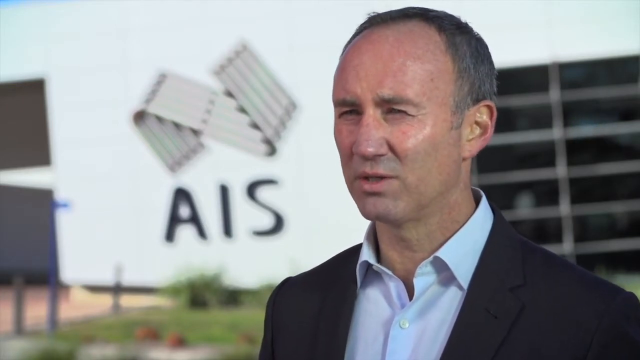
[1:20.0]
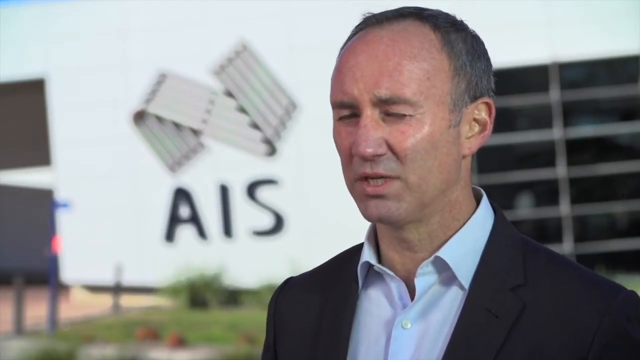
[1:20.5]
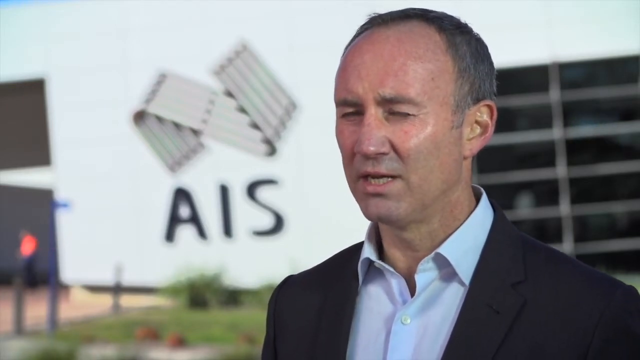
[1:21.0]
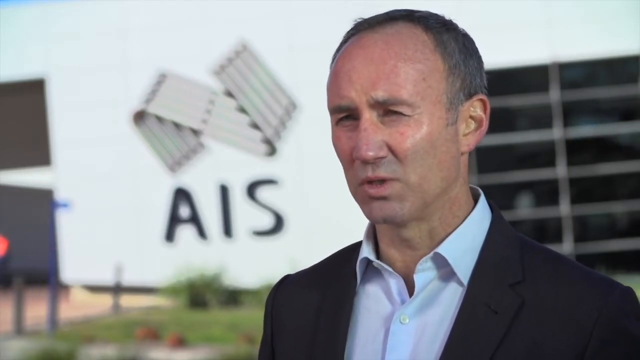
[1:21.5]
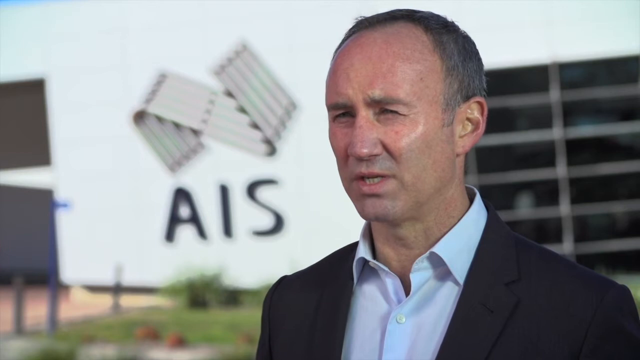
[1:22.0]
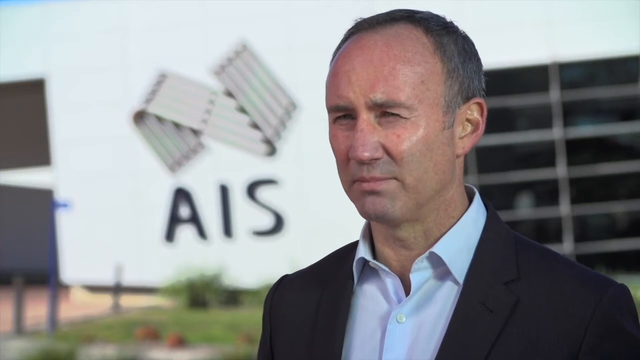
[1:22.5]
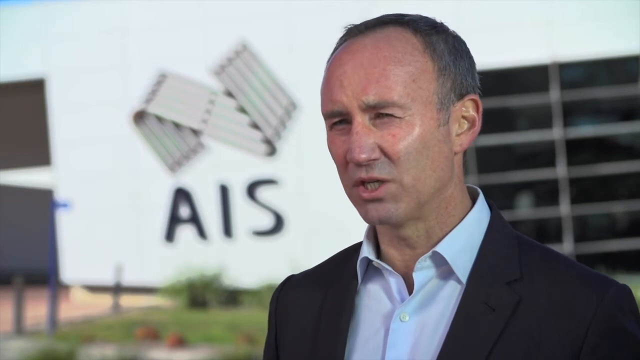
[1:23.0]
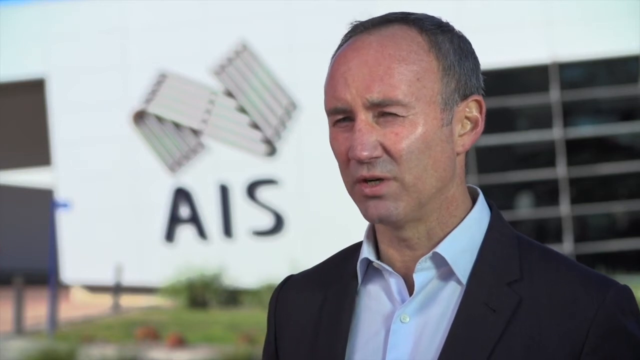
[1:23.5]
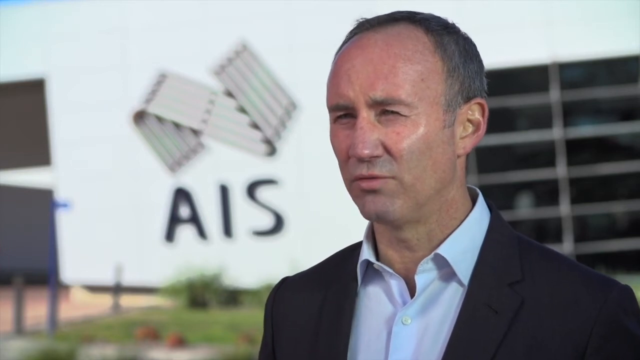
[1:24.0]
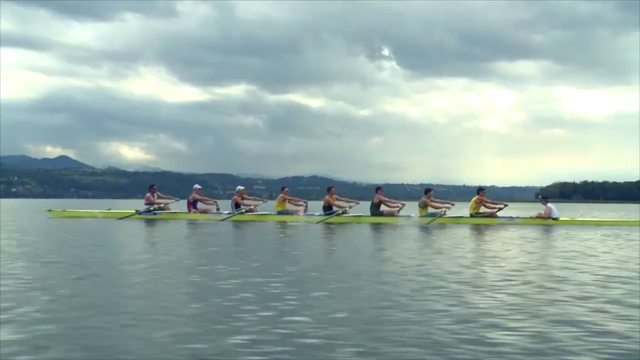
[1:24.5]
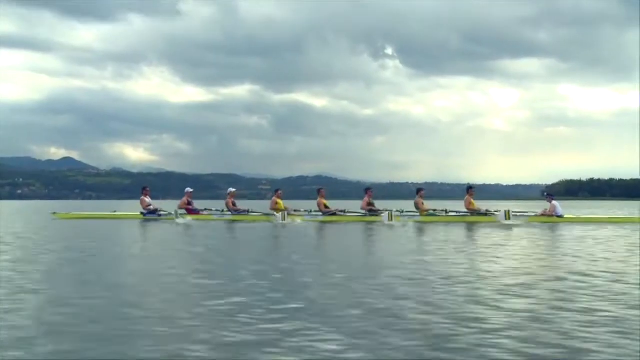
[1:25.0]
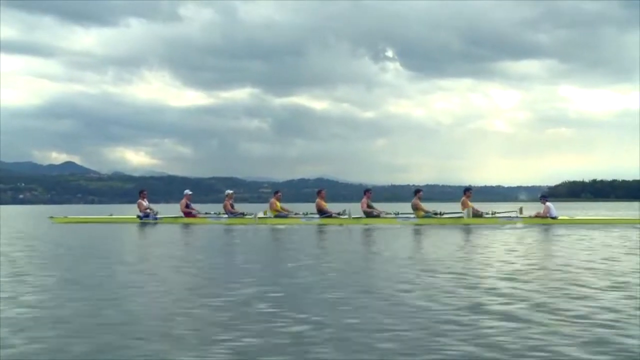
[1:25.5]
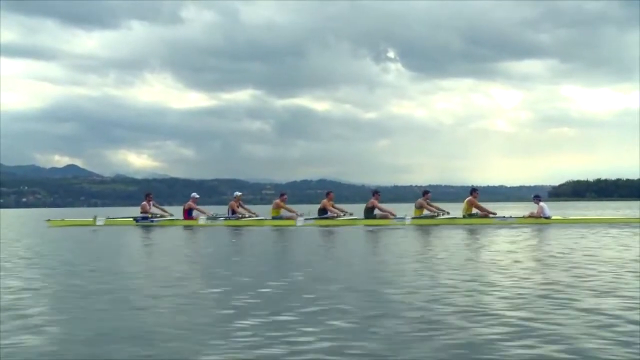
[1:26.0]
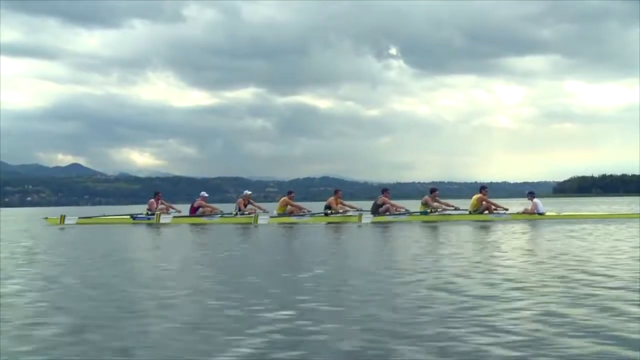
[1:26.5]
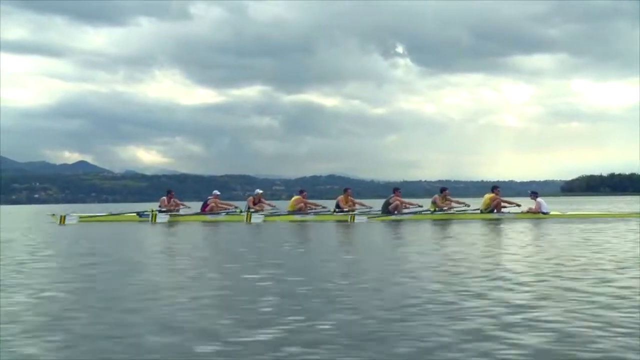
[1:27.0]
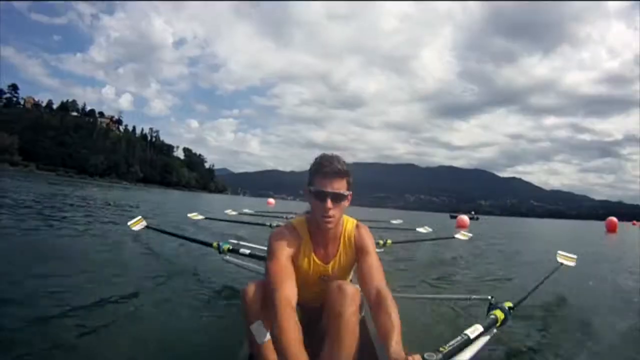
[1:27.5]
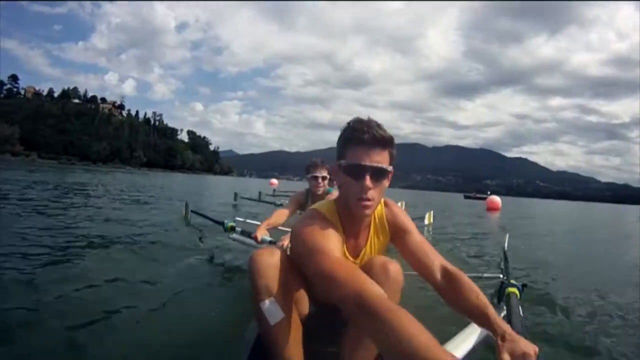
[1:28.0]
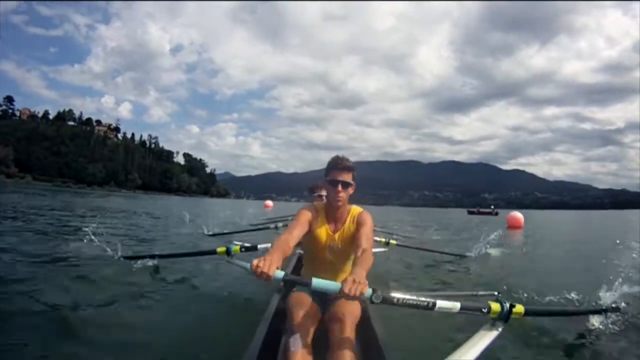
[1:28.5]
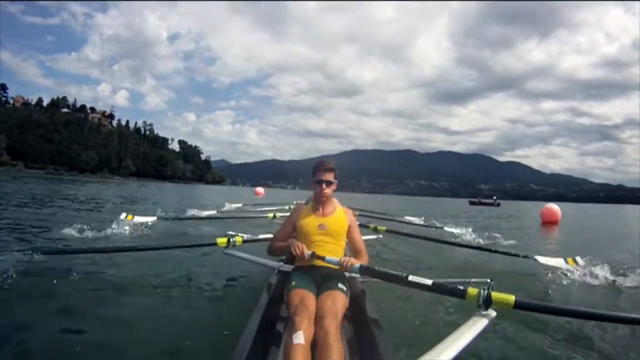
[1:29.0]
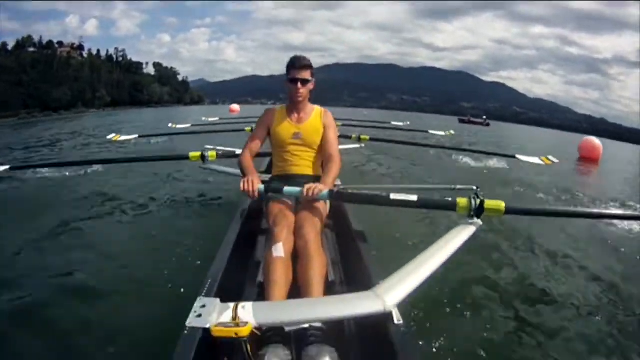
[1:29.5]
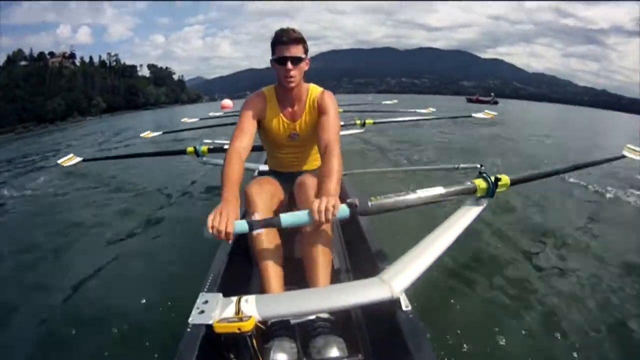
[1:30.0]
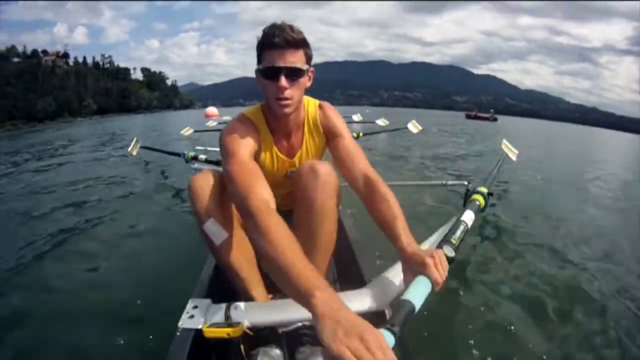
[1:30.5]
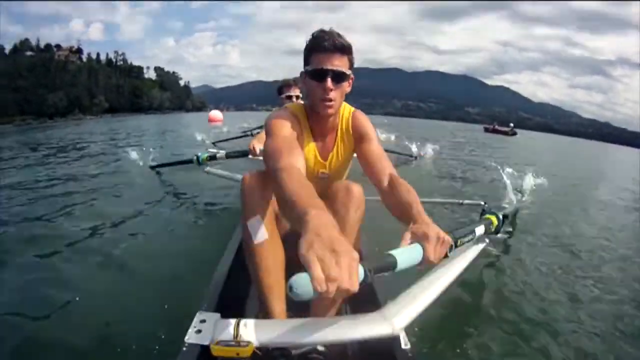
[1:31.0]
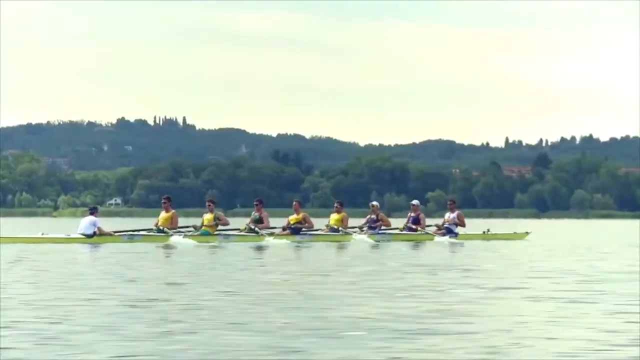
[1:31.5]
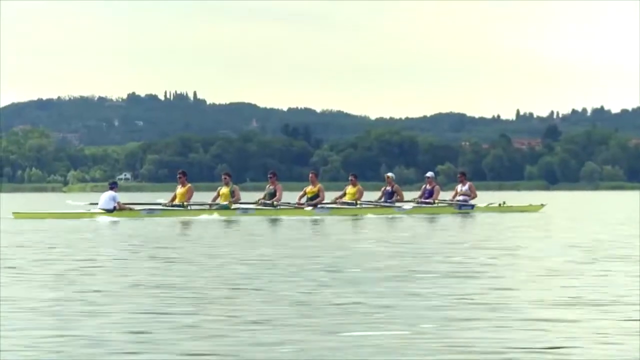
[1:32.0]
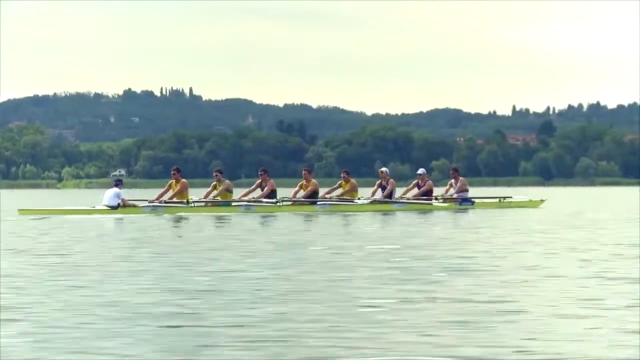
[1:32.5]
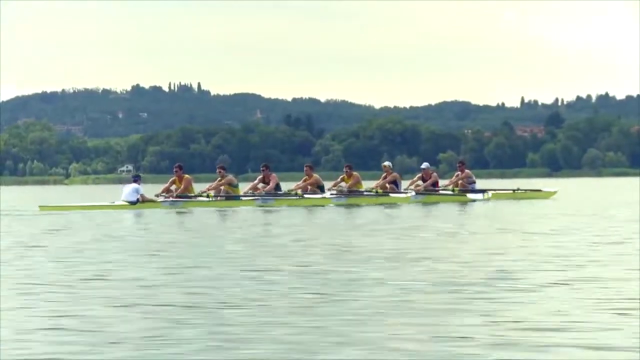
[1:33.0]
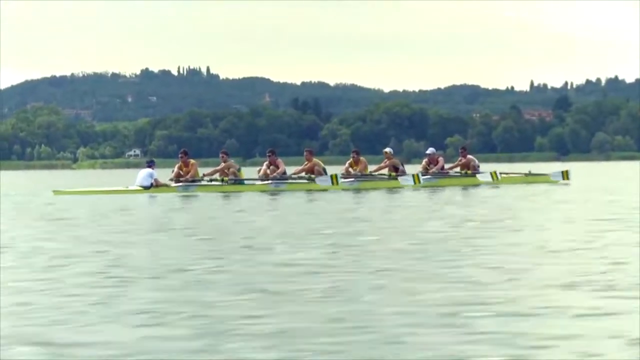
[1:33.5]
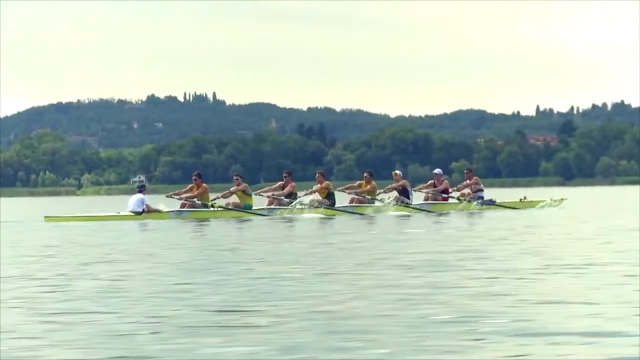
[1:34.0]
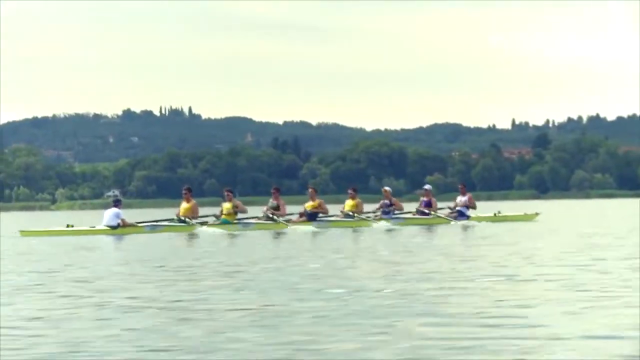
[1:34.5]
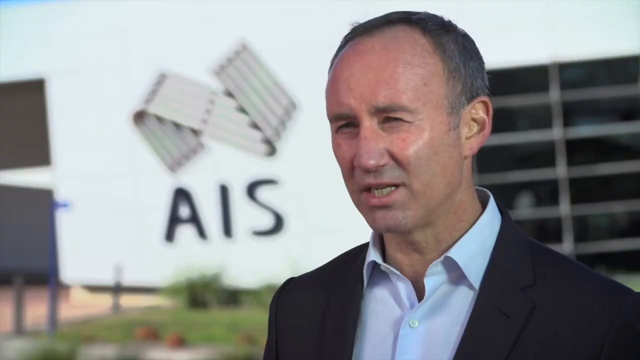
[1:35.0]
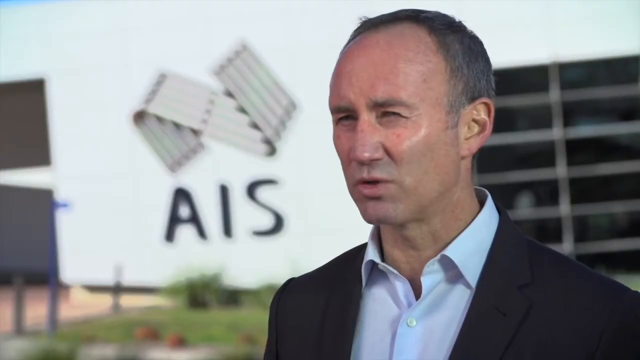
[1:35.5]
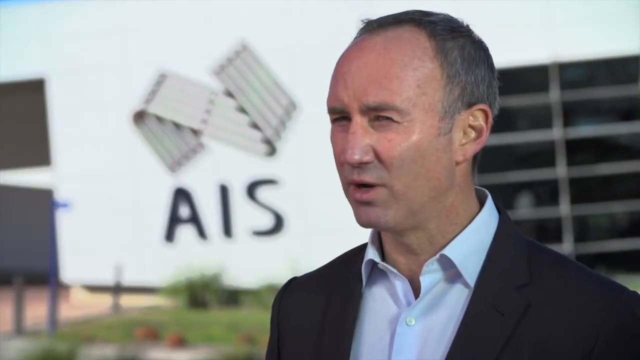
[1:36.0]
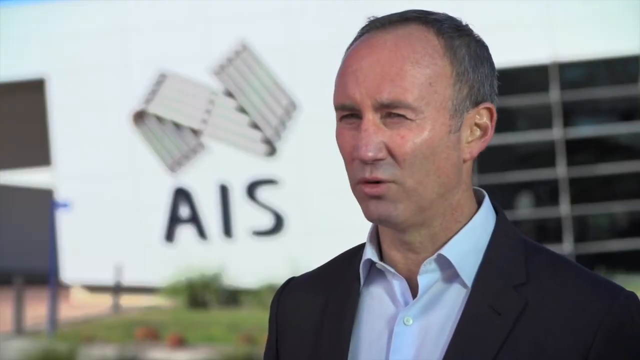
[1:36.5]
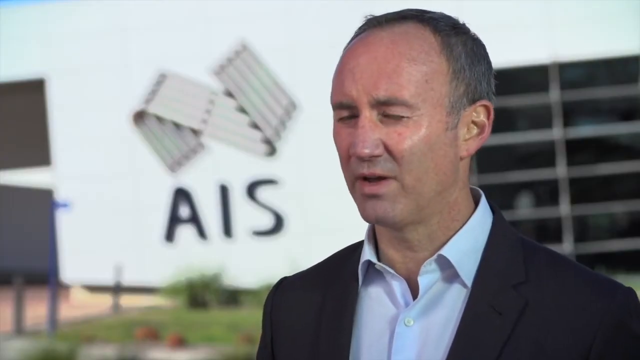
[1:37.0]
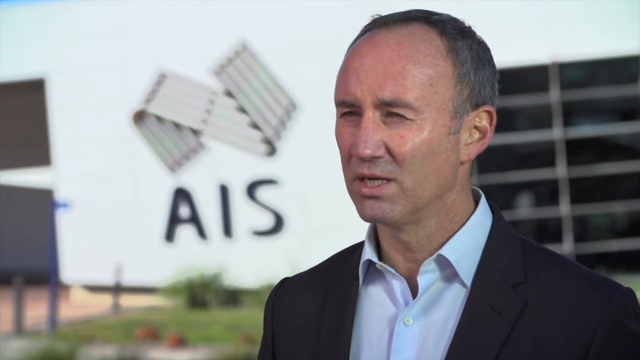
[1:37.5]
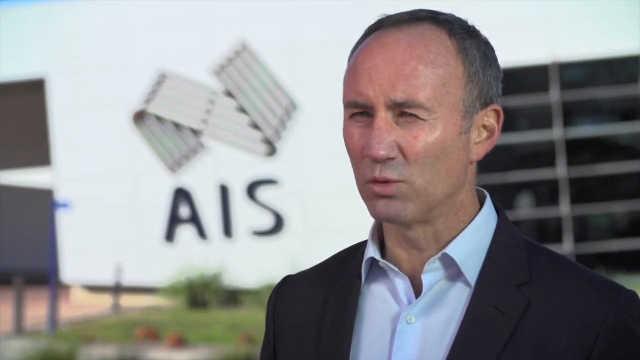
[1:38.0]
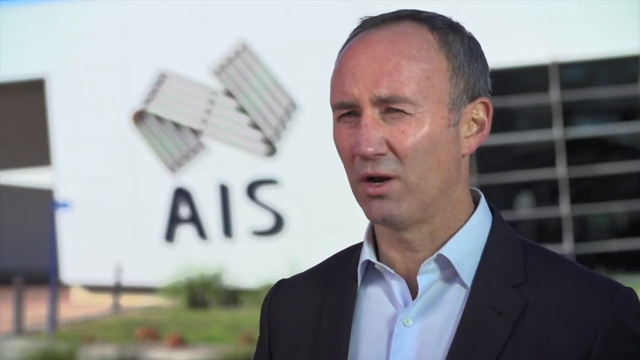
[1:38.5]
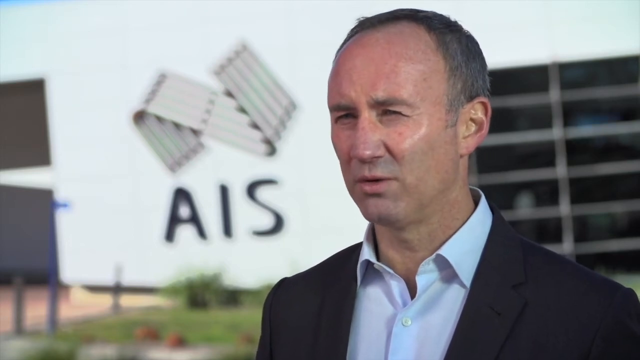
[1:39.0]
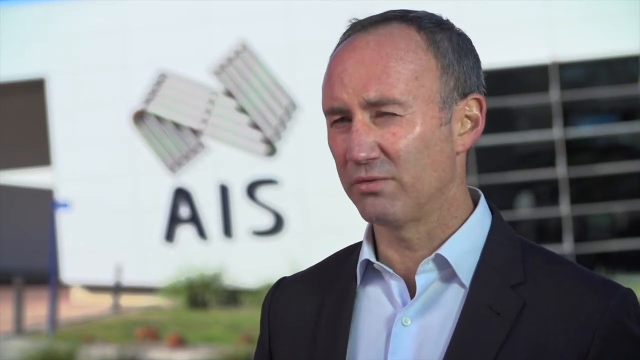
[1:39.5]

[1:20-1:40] The director of AIS stands in front of an AIS logo in the background, possibly outside. He wears a light blue collared shirt and a dark blue blazer. The scene shifts to the water, apparently a river of some sort, where a group of rowers in a very long boat, all dressed identically, row in sync very fast across the water. The water is calm, the day looks partly cloudy, and the shore with trees and hills is visible in the background. It is some sort of competition.